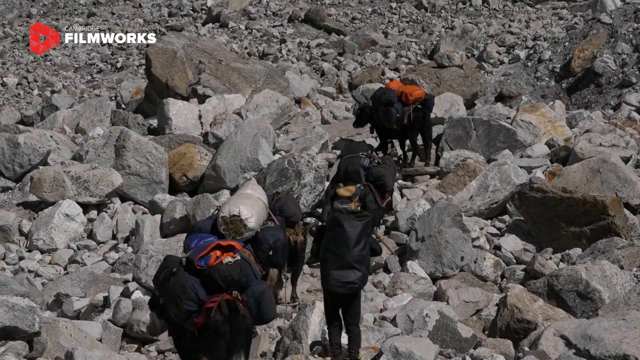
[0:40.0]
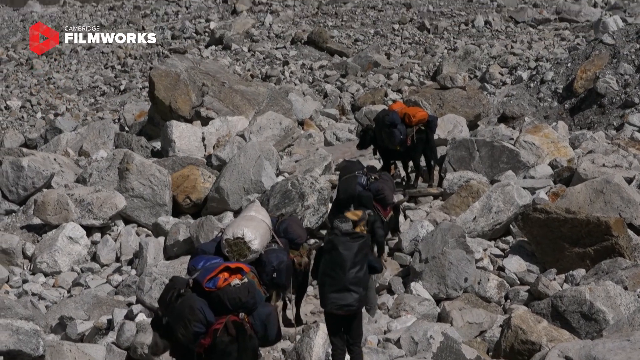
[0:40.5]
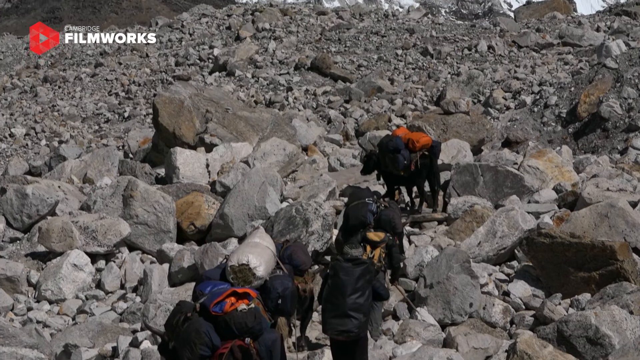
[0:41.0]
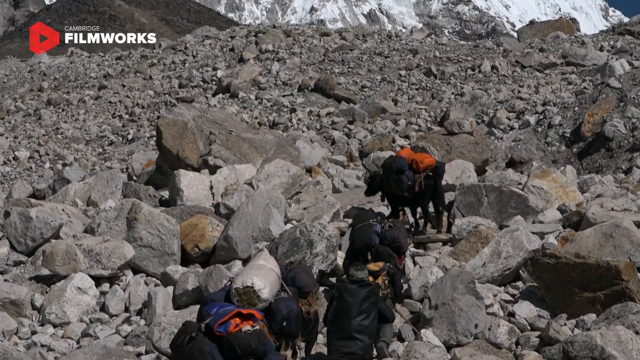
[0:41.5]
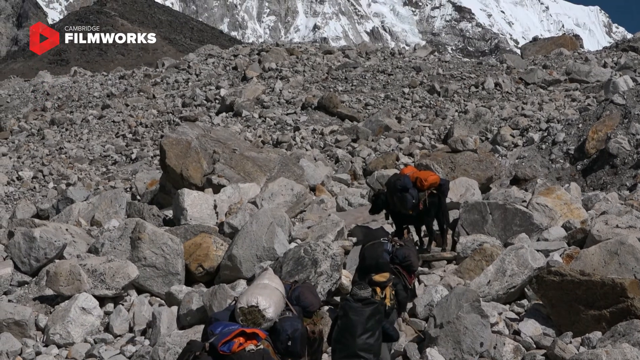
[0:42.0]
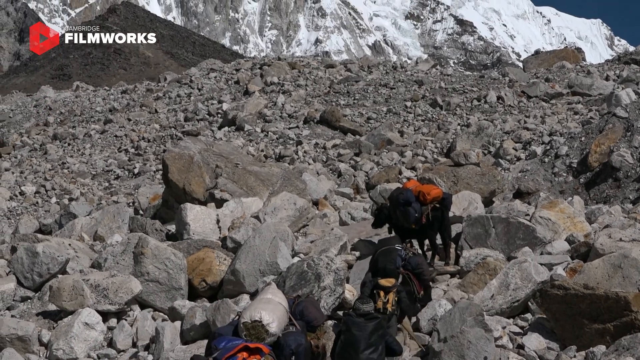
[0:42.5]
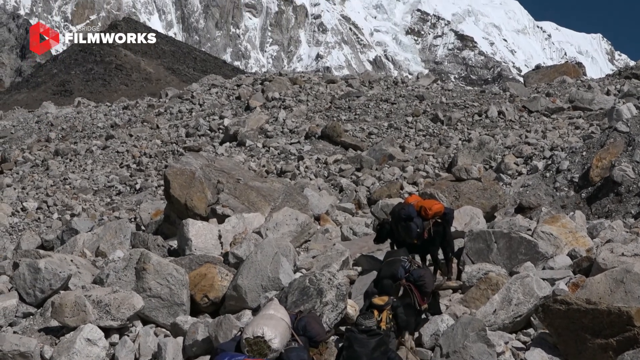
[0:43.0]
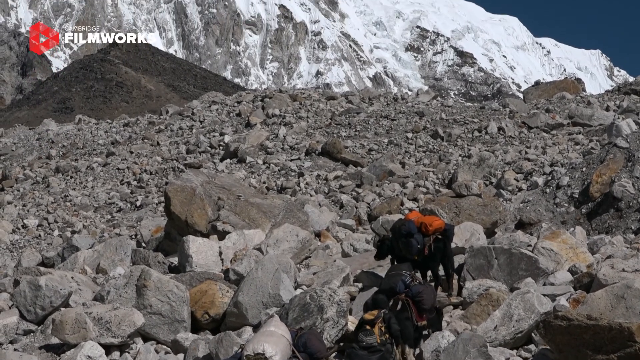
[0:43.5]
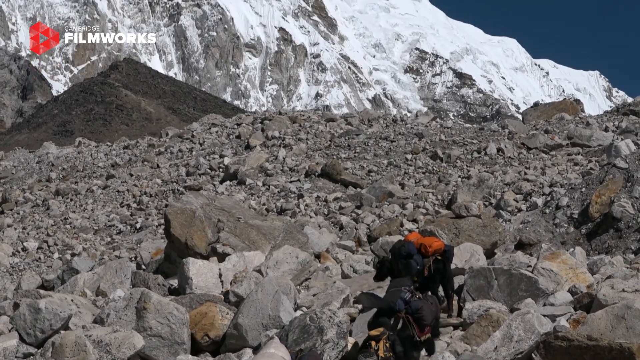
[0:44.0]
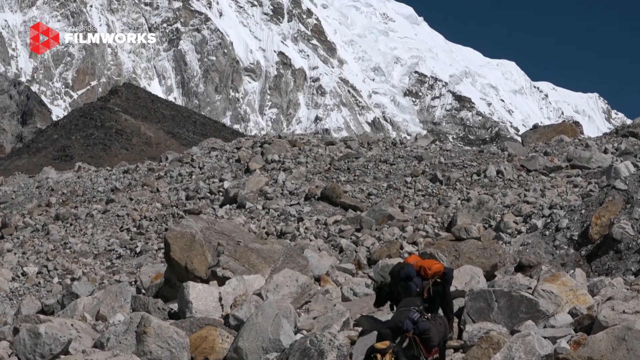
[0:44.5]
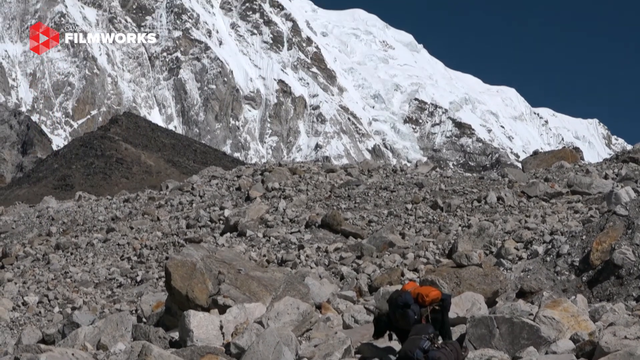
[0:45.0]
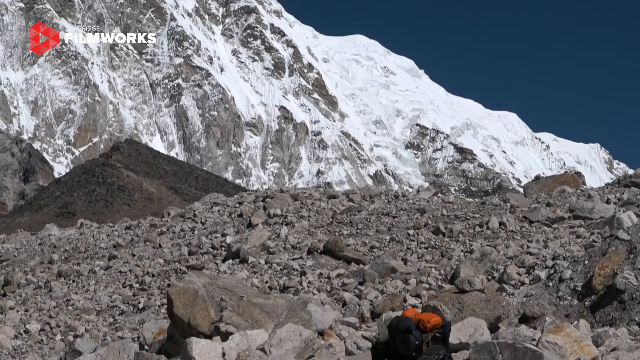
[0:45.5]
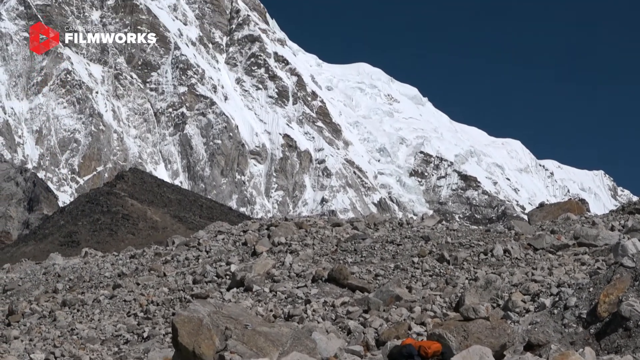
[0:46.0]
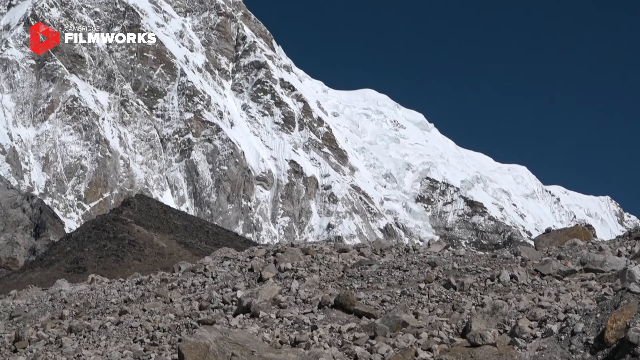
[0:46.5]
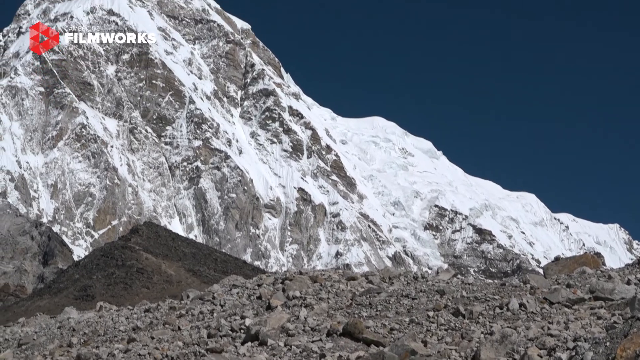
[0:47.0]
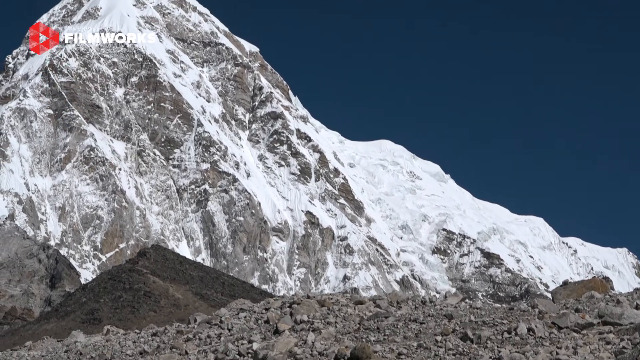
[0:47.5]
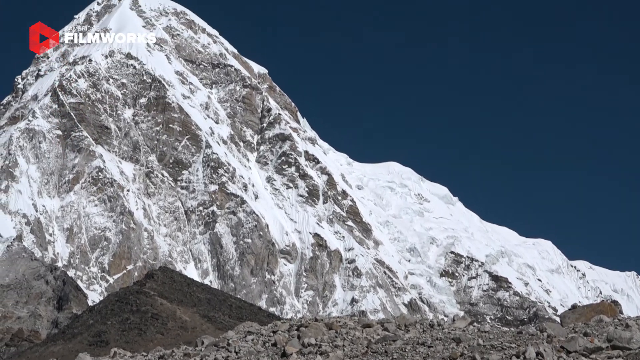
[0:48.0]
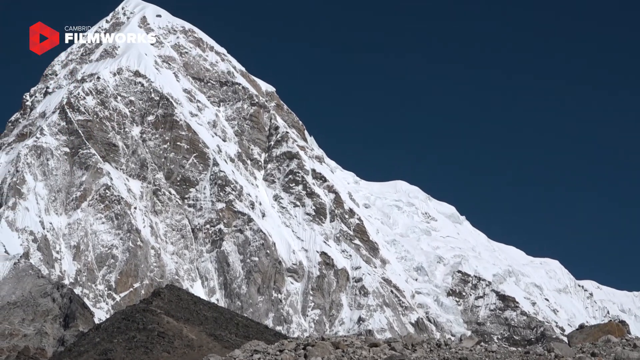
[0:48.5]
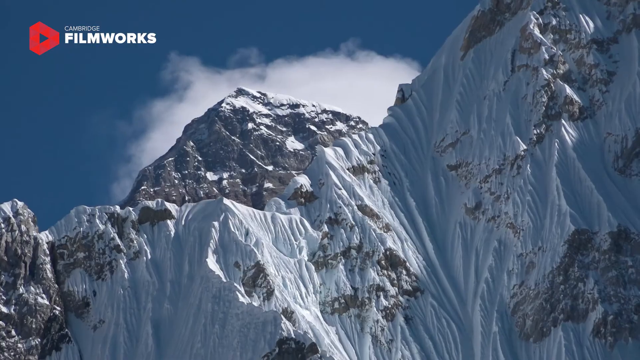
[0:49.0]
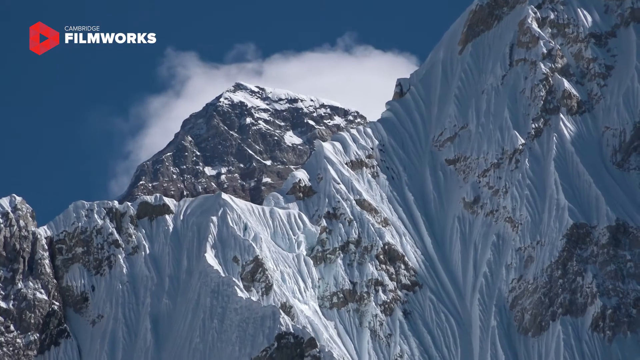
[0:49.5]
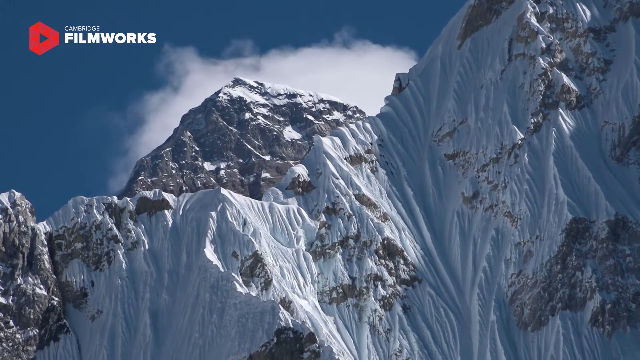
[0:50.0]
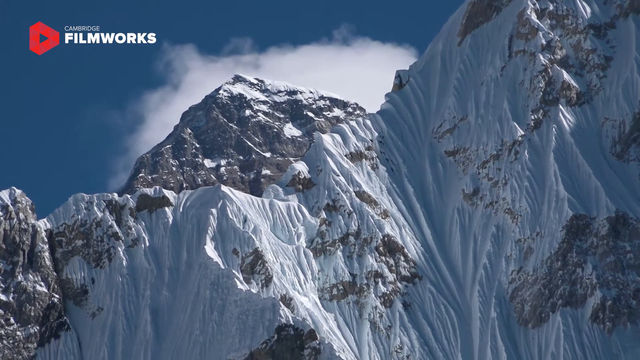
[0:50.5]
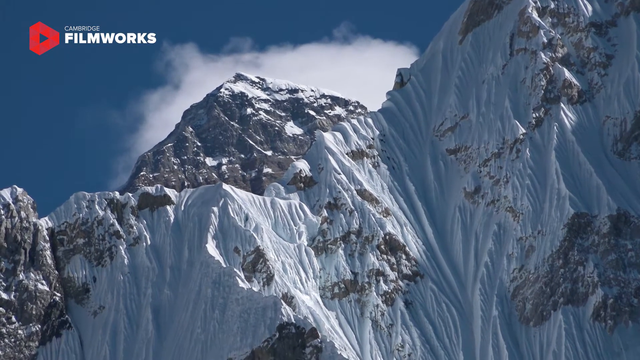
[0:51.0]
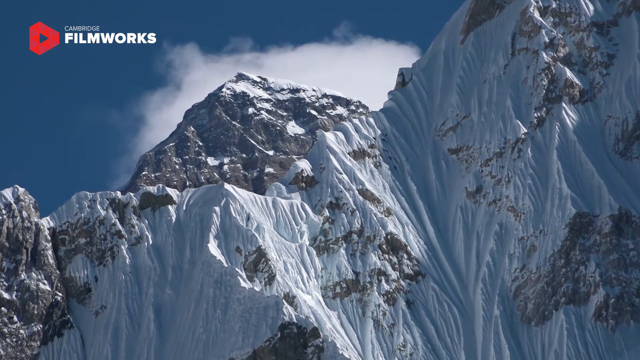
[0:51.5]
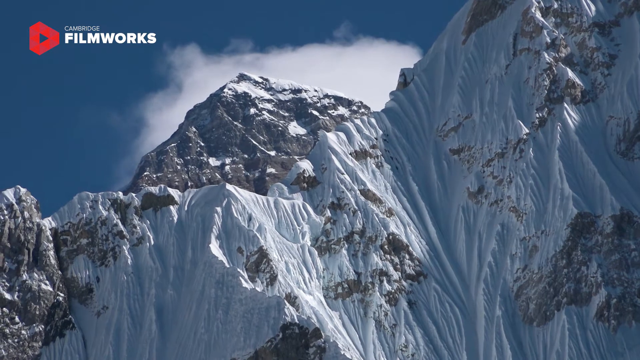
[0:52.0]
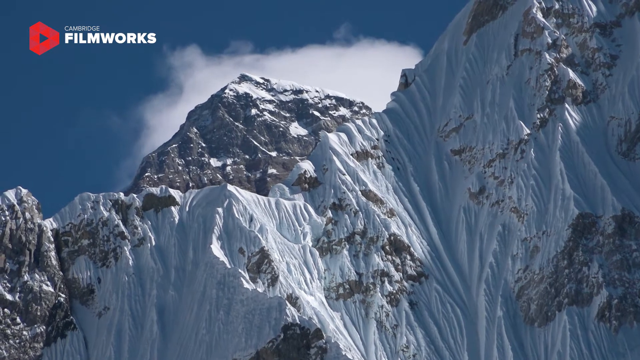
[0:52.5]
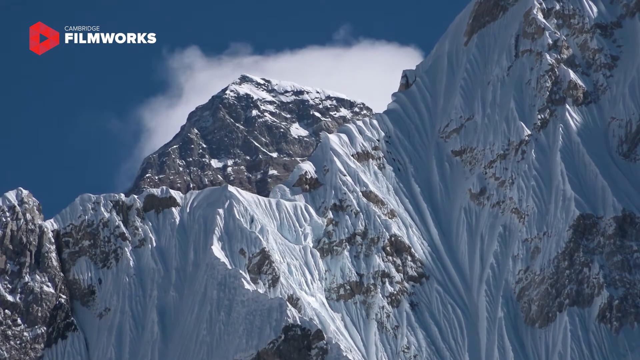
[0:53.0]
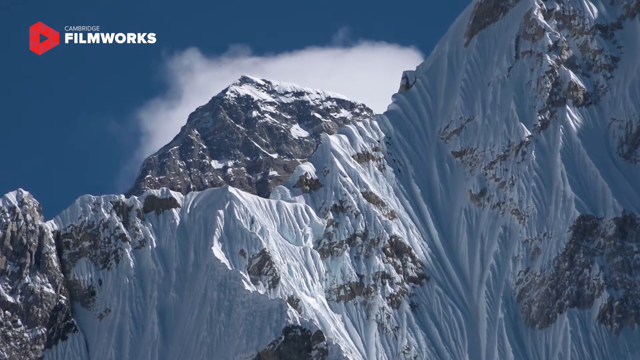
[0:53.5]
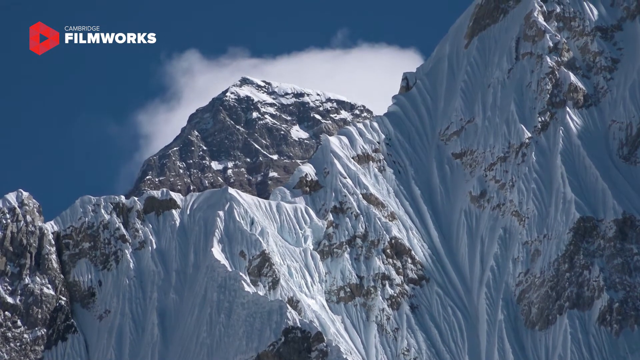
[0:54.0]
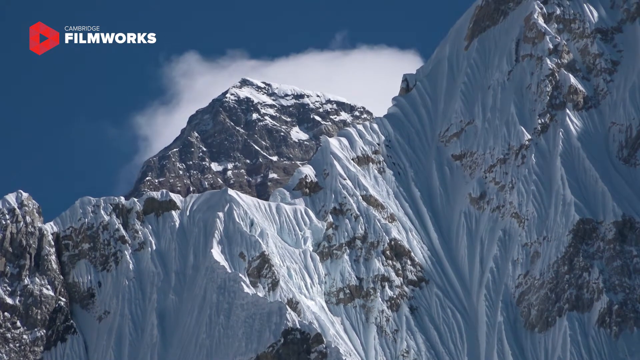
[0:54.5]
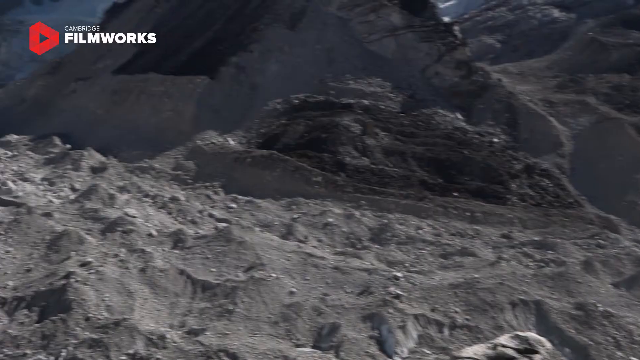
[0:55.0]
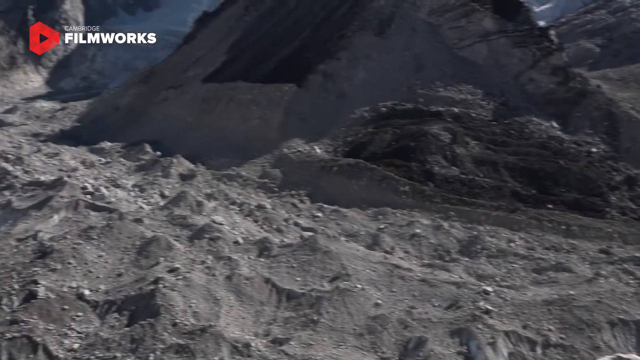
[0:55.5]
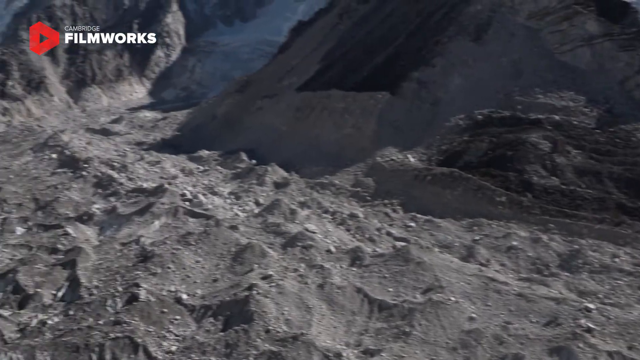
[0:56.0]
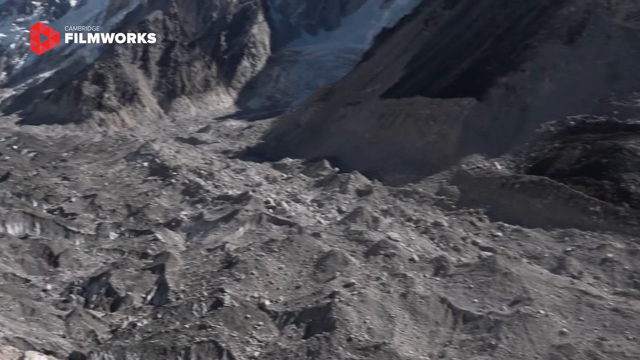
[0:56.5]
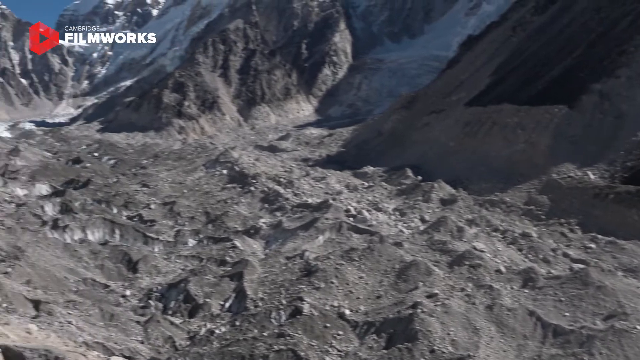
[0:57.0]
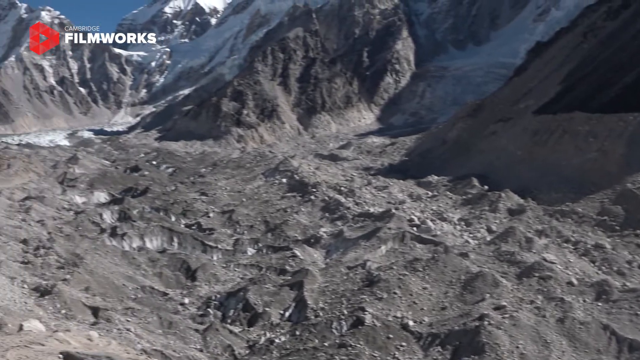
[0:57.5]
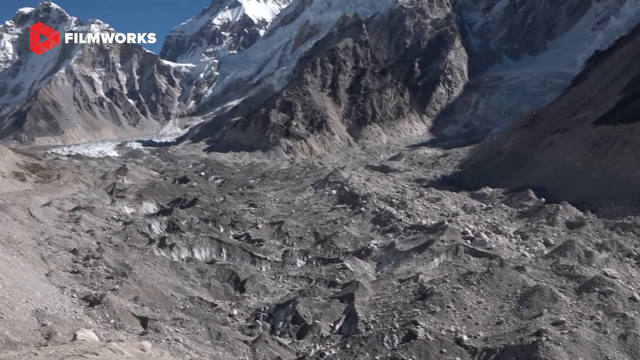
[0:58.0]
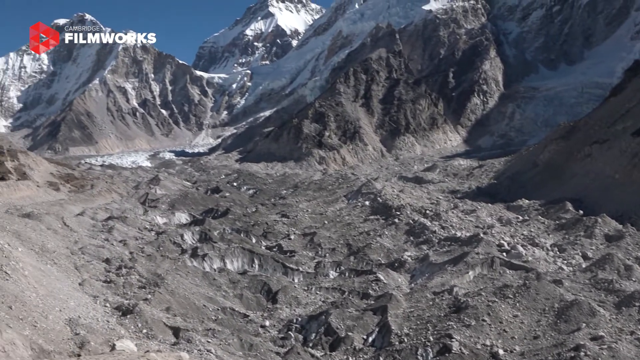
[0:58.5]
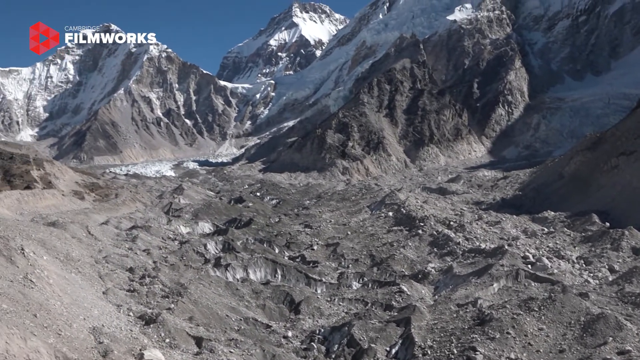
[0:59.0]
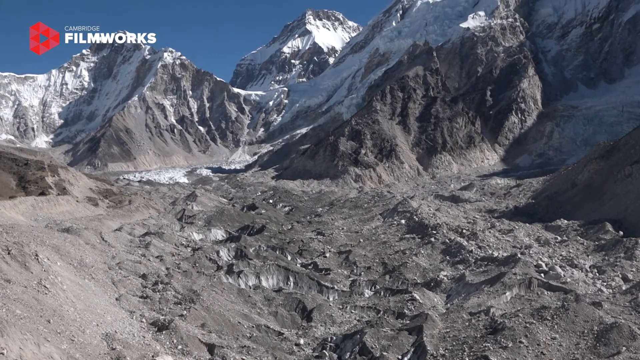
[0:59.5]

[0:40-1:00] The hikers and the companion animal are at some kind of base camp or glacier valley. The ground is very rocky and rough, with many rocks of different sizes, and in the background is a large view of a mountaintop covered with snow. The camera points to the ice-capped mountains, then cuts to another part of the mountain with mist forming around it, shown in high detail so small details of the mountain surface are visible. The camera then pans to the base, or glacier valley, showing uneven terrain without many loose rocks. The footage shows a lot of detail on the ground's surface.